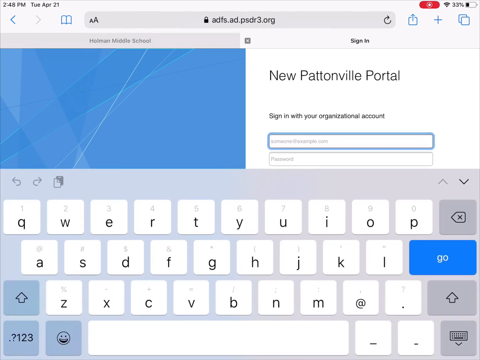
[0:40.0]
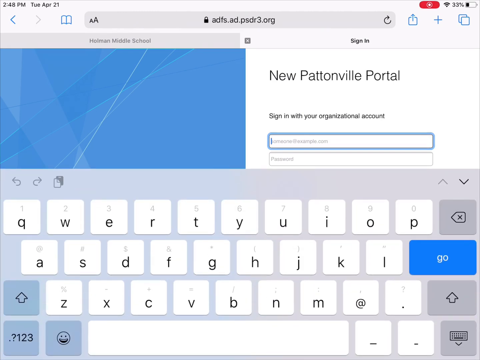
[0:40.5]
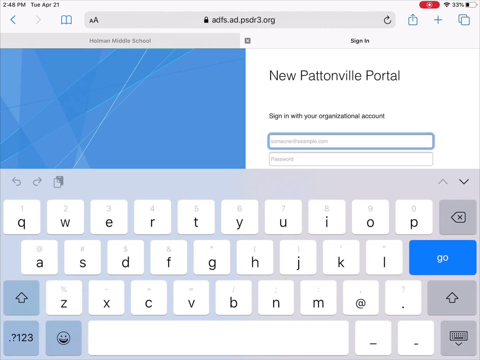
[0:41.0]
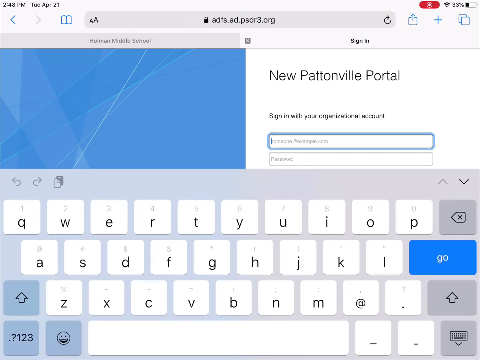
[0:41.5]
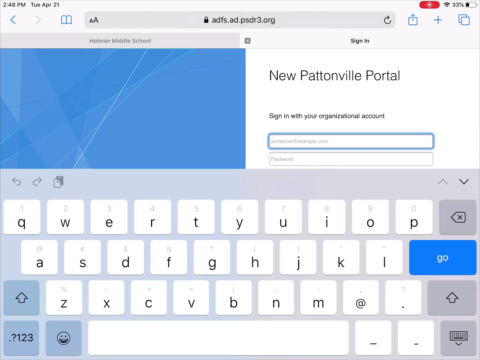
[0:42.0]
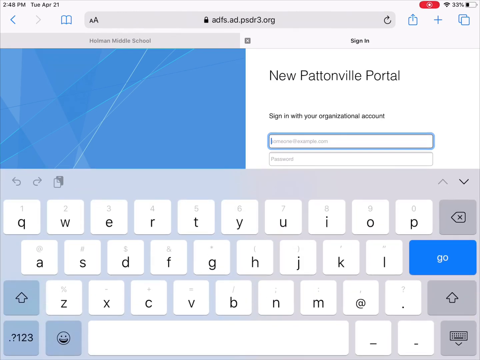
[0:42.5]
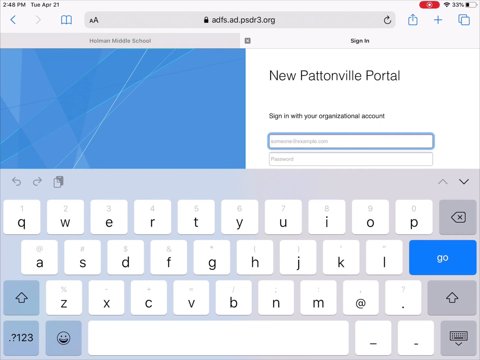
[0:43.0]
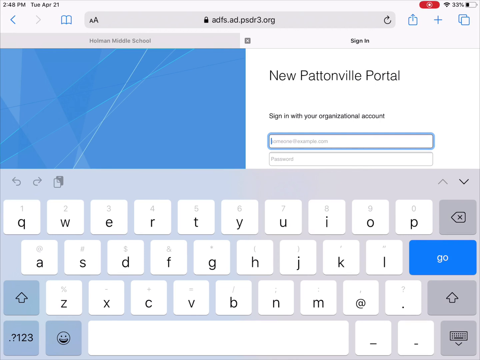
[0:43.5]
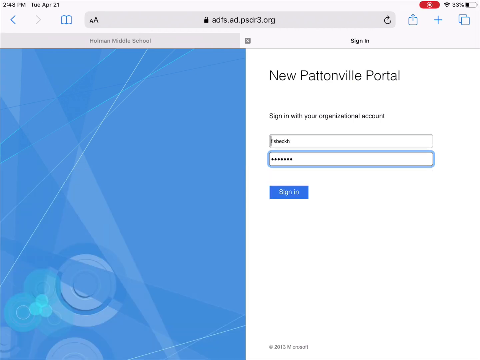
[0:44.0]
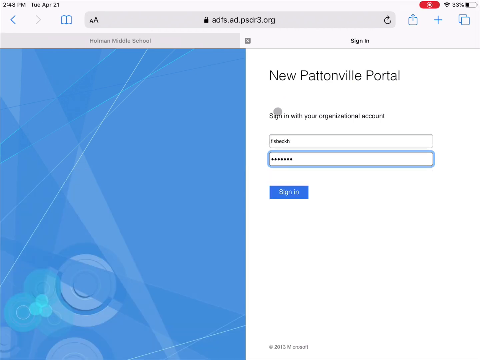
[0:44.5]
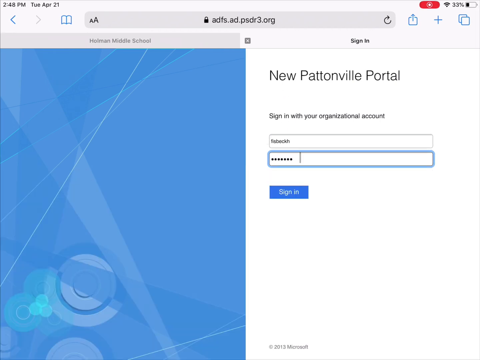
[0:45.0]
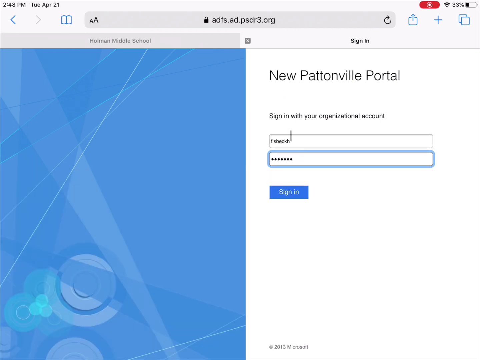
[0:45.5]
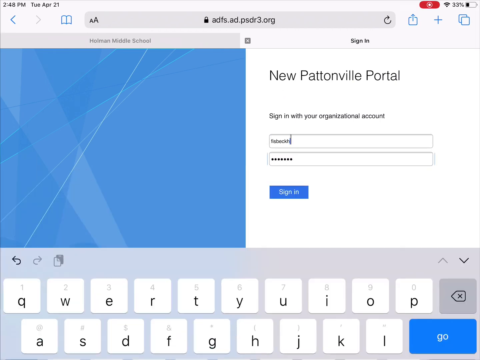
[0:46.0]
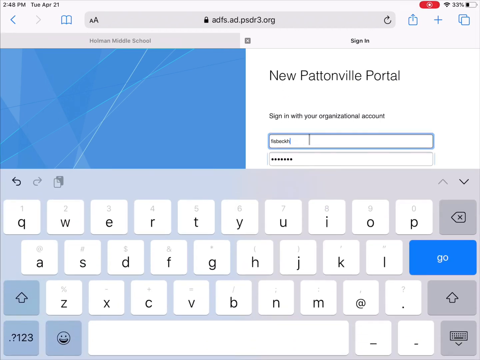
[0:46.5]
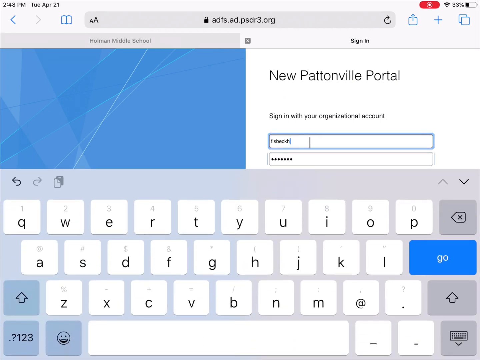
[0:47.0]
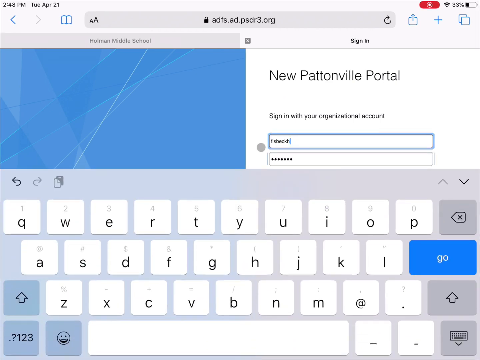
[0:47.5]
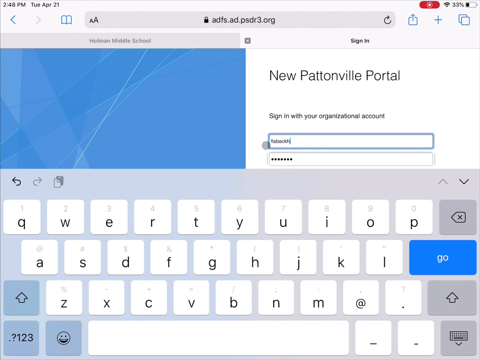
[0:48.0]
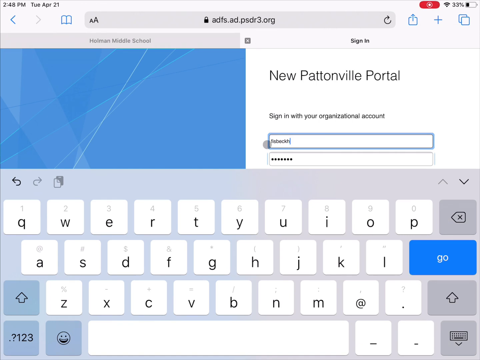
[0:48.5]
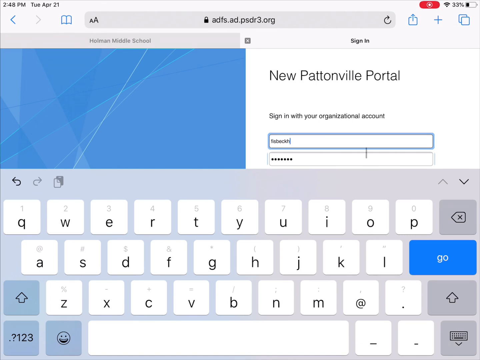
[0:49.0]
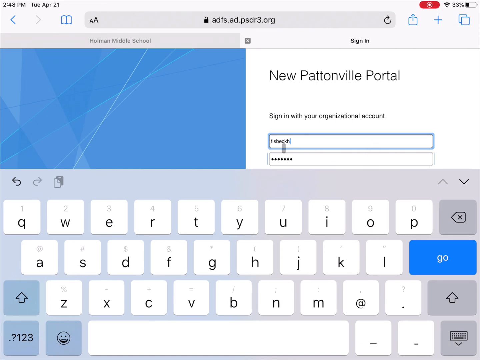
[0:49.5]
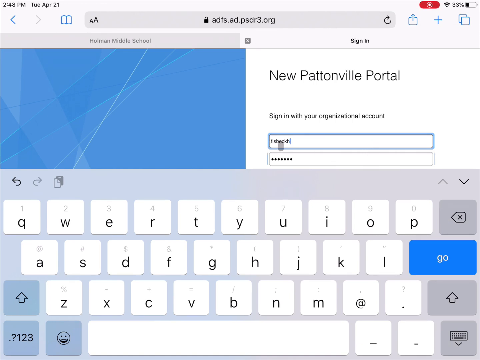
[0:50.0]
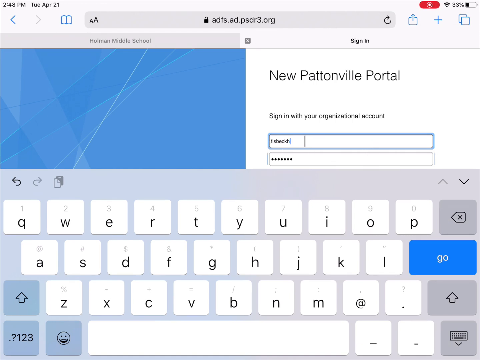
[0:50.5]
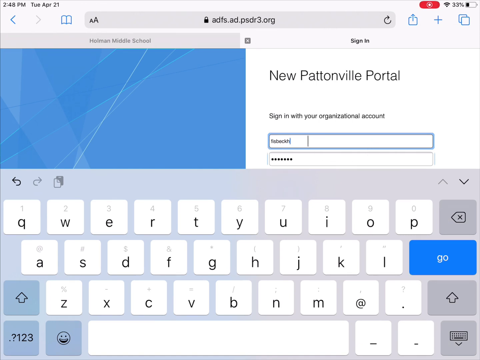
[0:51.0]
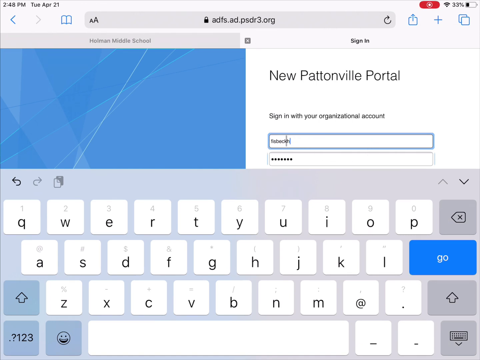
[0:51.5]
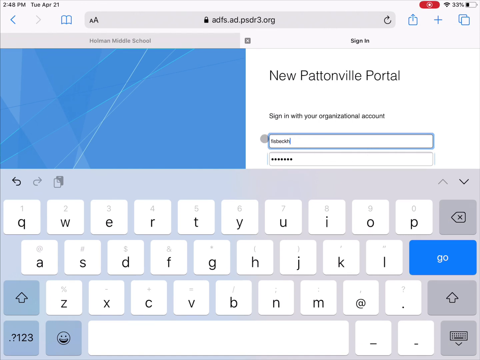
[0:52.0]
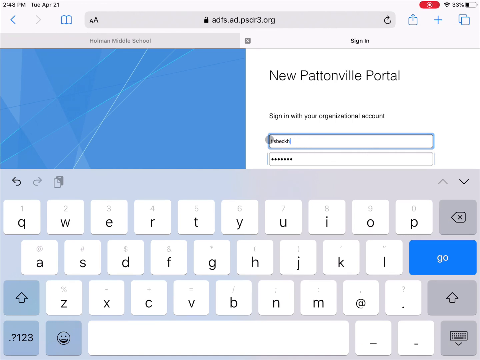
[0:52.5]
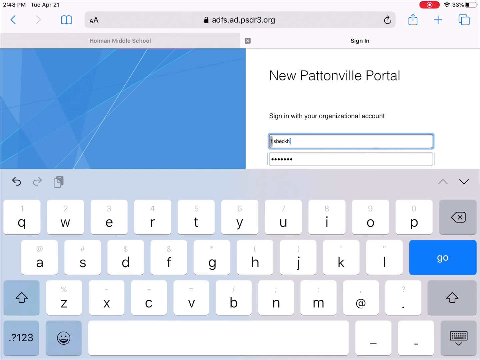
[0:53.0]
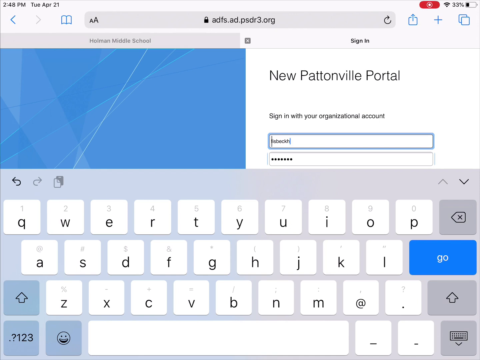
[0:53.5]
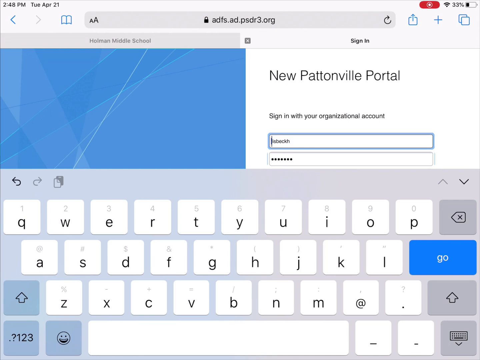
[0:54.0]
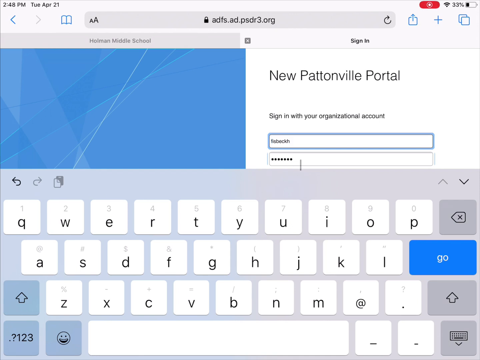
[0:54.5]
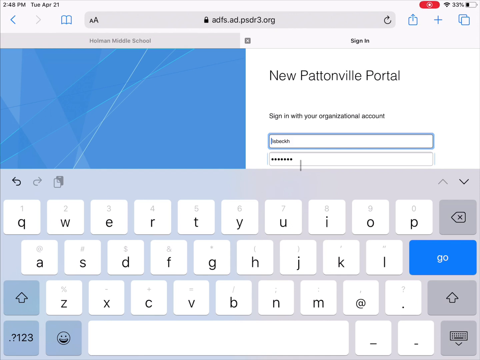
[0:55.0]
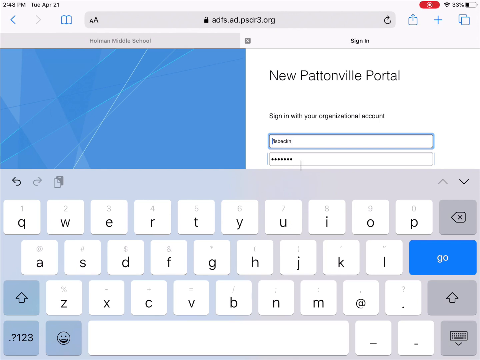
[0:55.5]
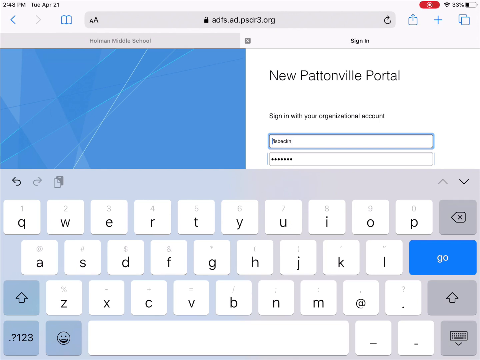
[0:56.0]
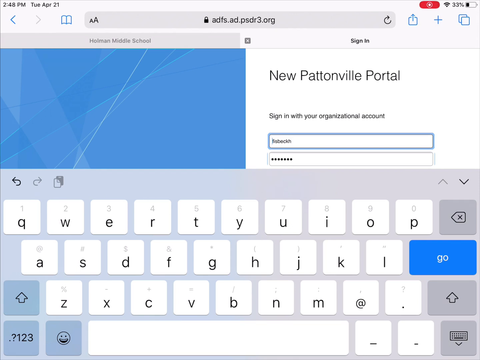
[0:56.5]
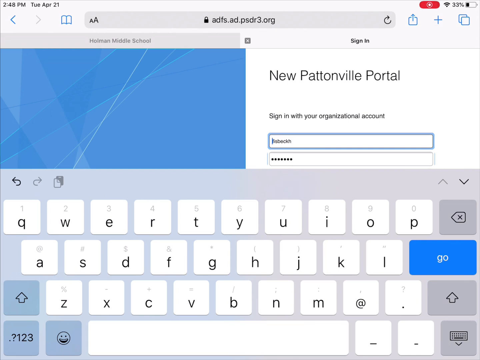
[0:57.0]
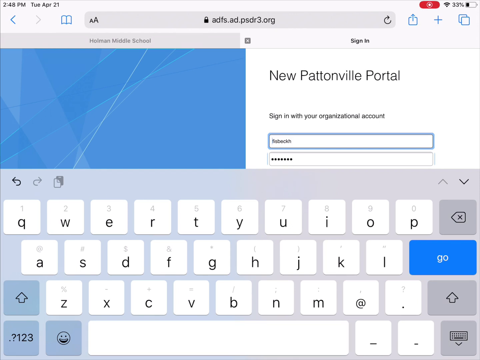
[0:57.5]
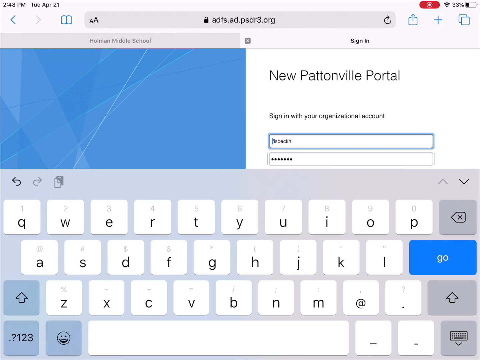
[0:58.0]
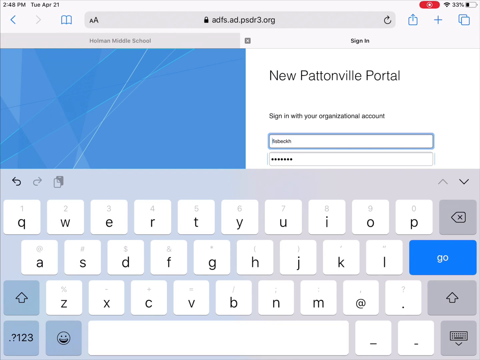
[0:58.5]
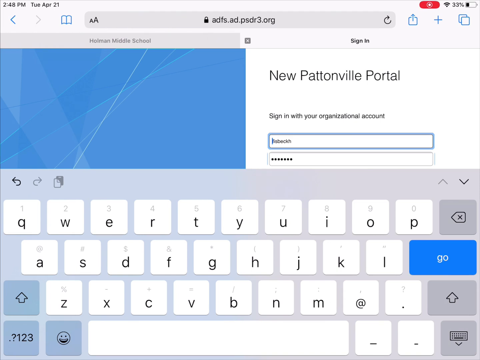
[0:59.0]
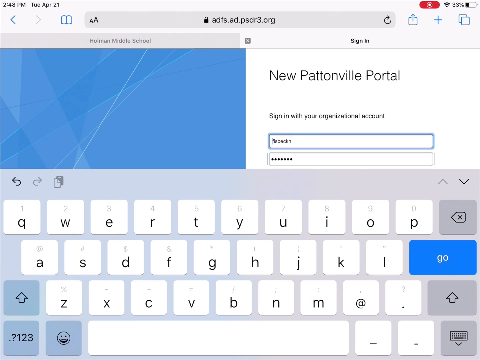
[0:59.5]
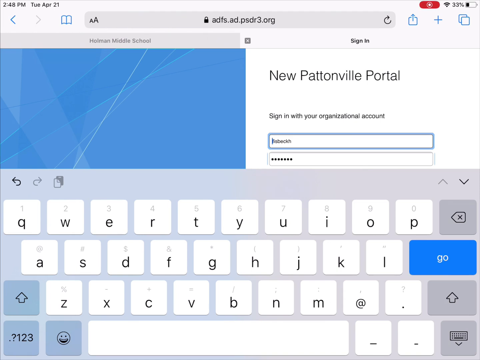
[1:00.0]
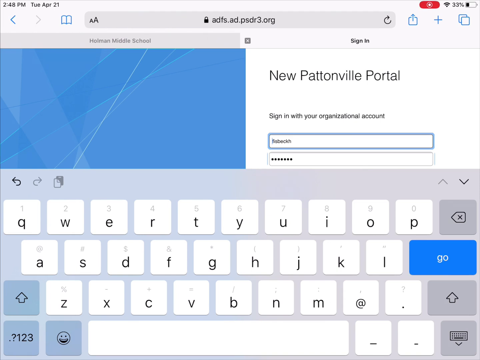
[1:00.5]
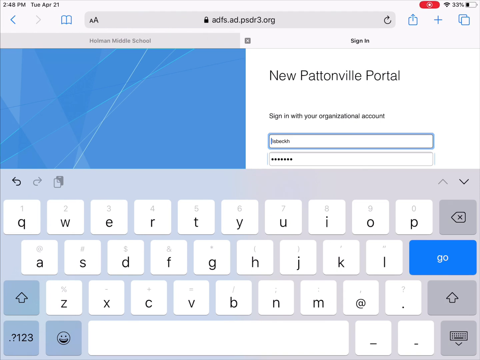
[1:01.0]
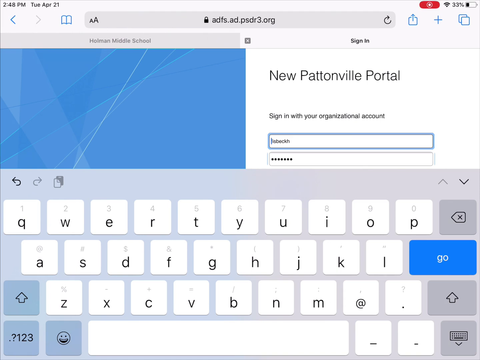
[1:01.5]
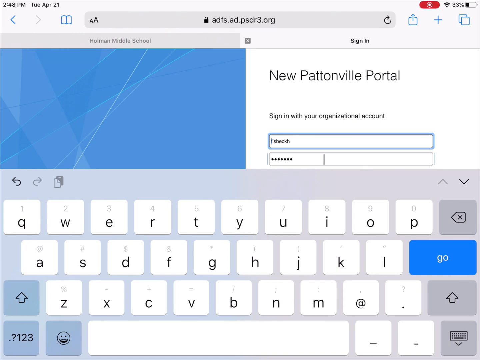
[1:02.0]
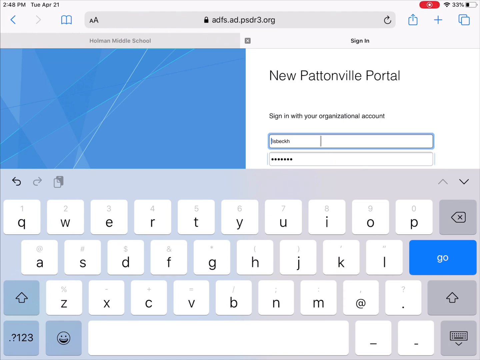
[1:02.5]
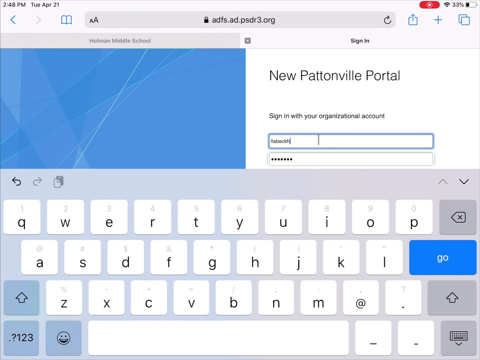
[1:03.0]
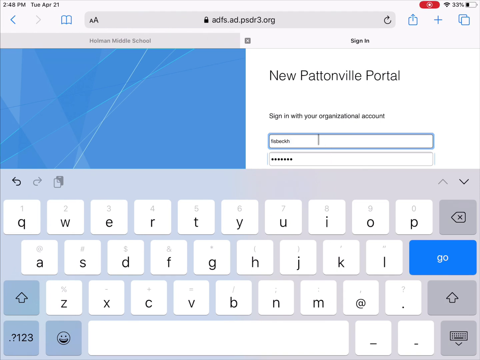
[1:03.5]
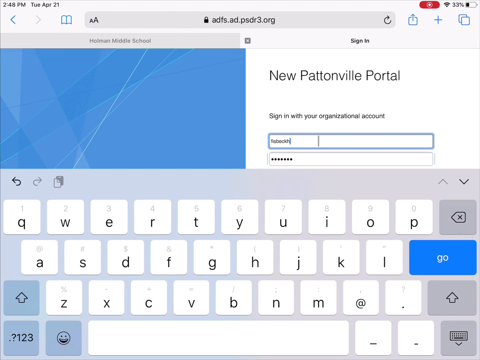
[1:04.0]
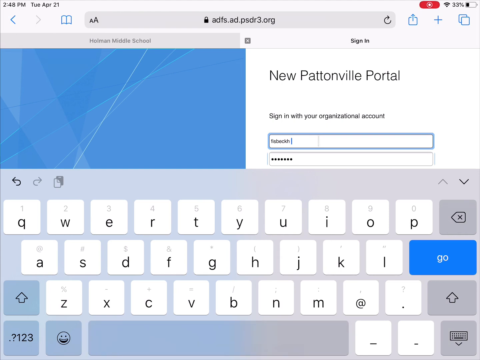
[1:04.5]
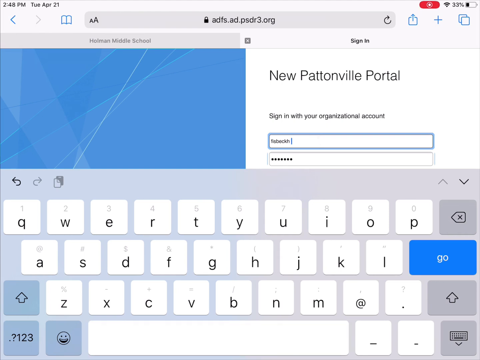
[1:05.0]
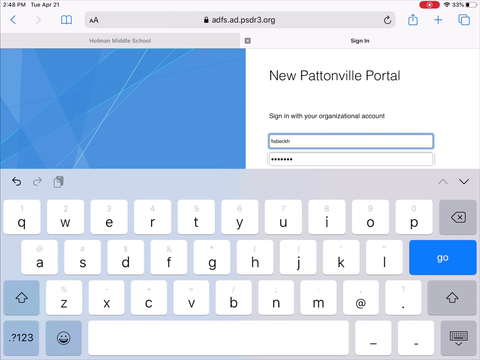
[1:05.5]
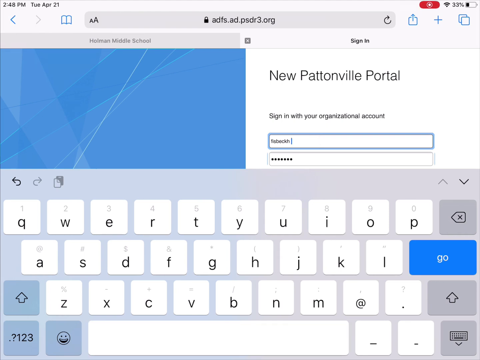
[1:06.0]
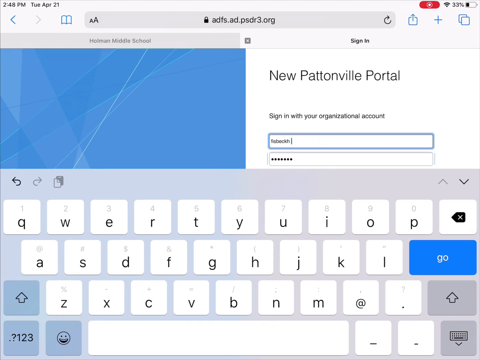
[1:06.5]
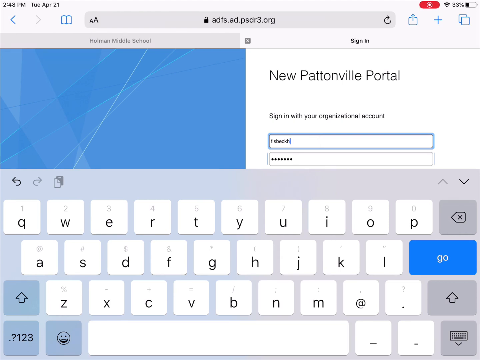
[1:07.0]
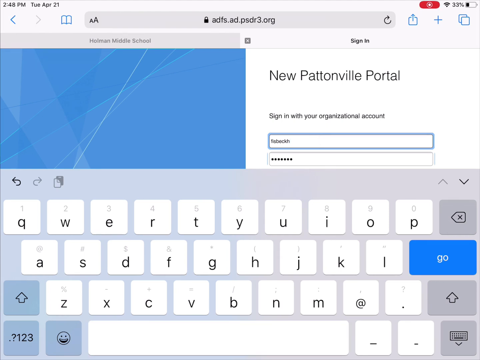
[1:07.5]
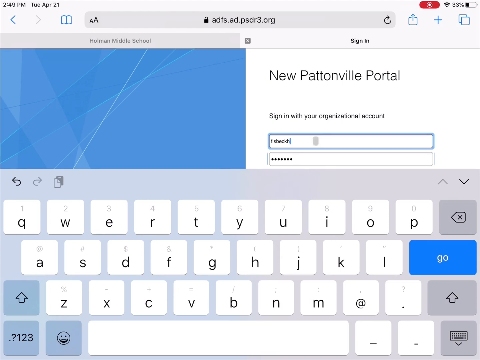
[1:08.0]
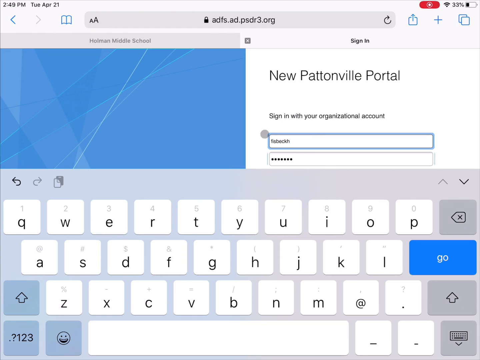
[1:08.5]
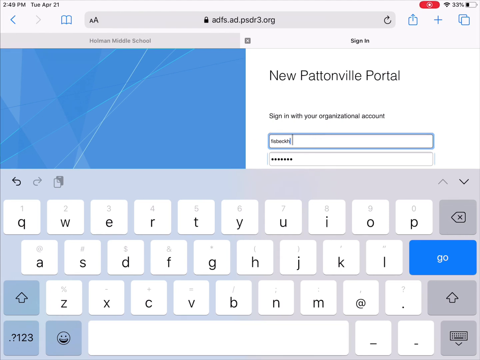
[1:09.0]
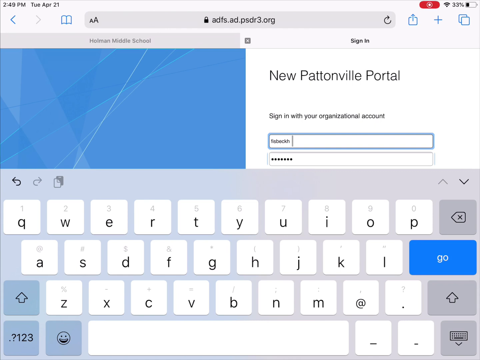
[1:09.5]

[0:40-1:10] The same MacBook dashboard is shown in a screen recording demonstrating how to use Safari to log into Clever. Clever.com opens, and Patternville School District appears, with a prompt to log in with Active Directory and a note that everyone working there is supposed to have an organizational account. A username is being entered, and the password field is below it.